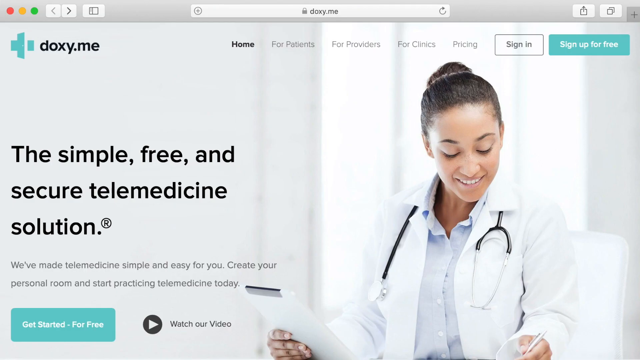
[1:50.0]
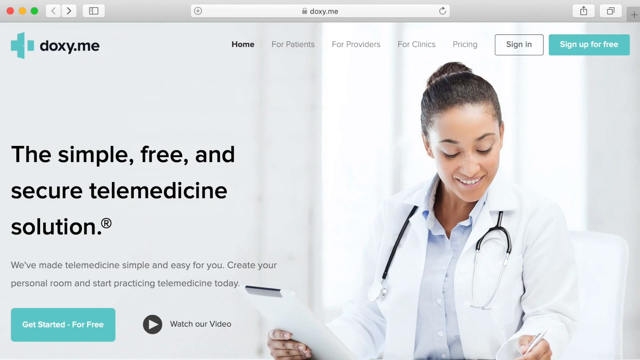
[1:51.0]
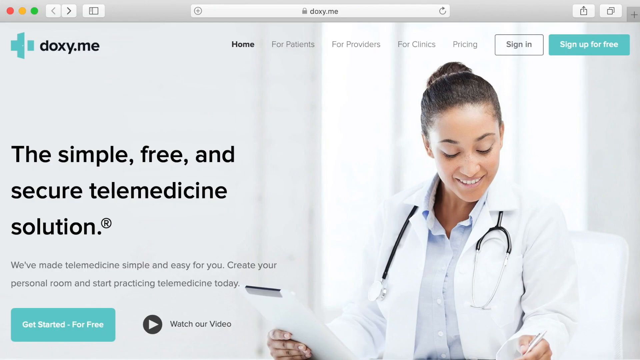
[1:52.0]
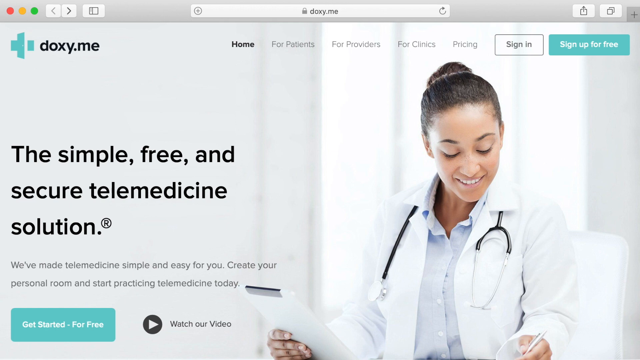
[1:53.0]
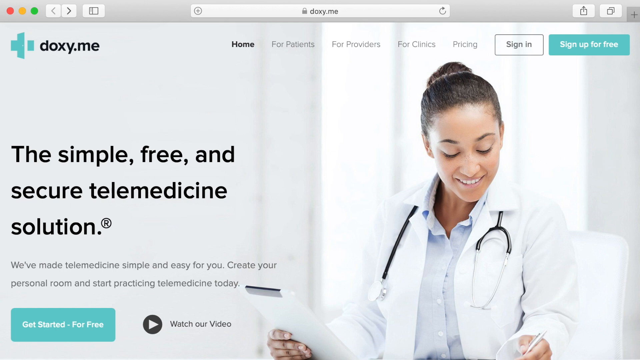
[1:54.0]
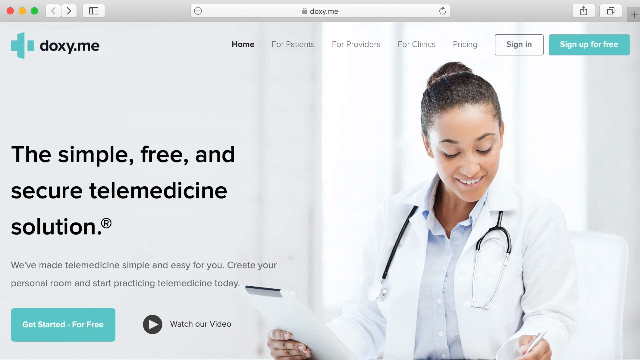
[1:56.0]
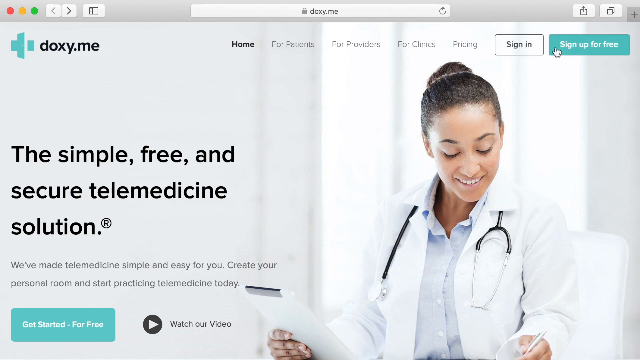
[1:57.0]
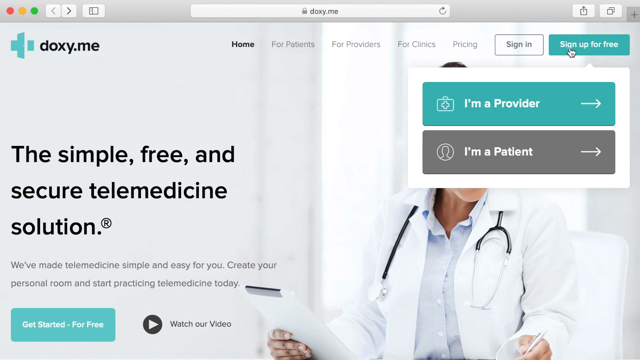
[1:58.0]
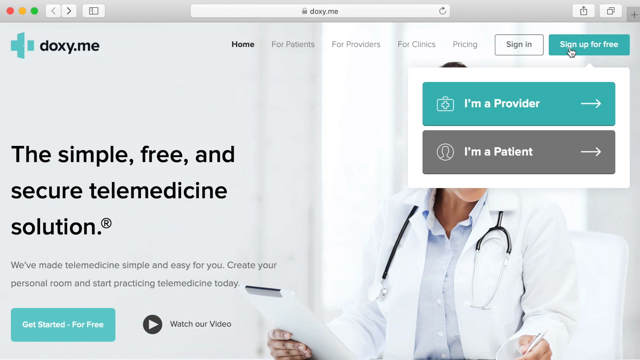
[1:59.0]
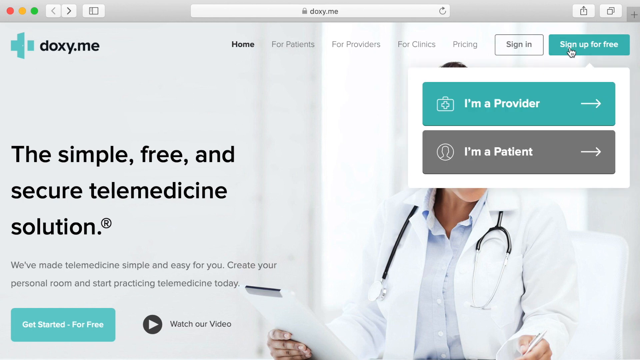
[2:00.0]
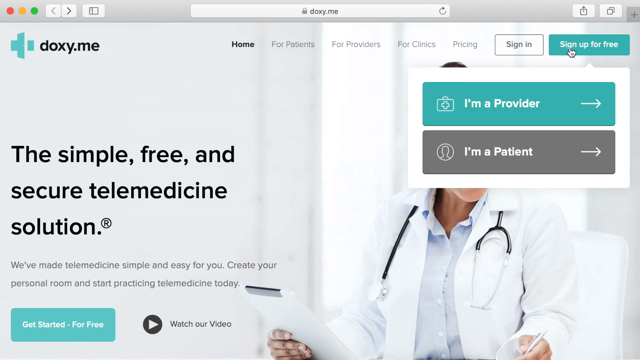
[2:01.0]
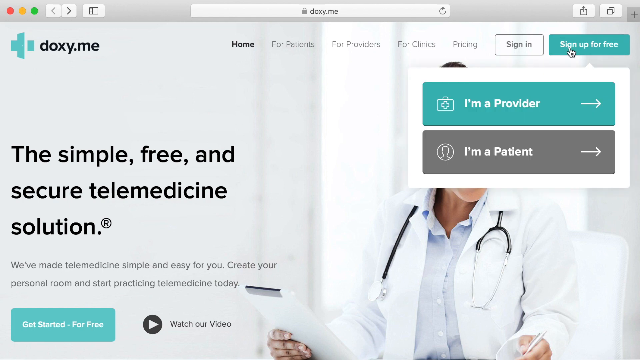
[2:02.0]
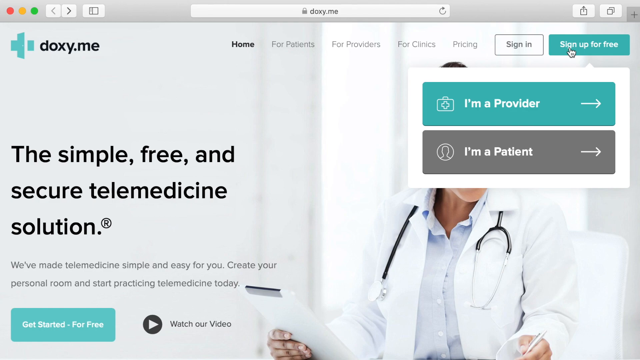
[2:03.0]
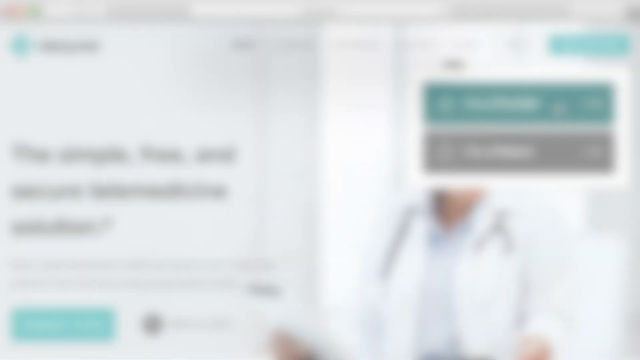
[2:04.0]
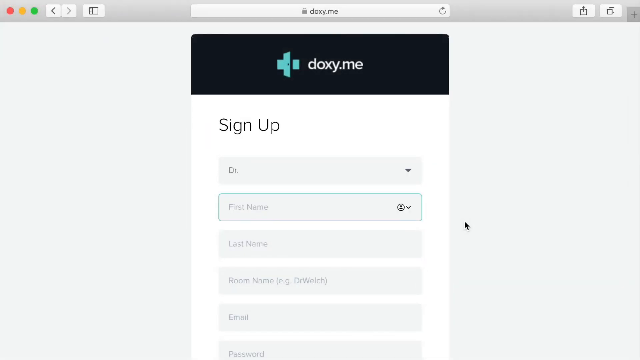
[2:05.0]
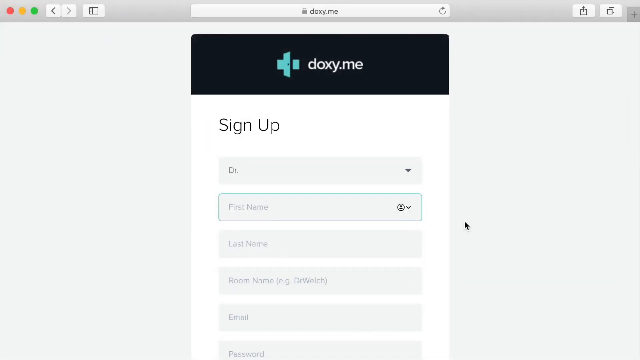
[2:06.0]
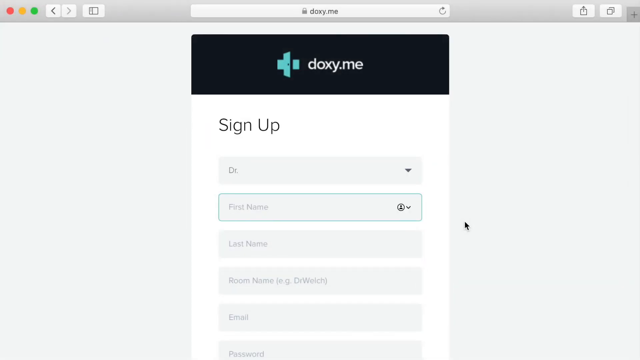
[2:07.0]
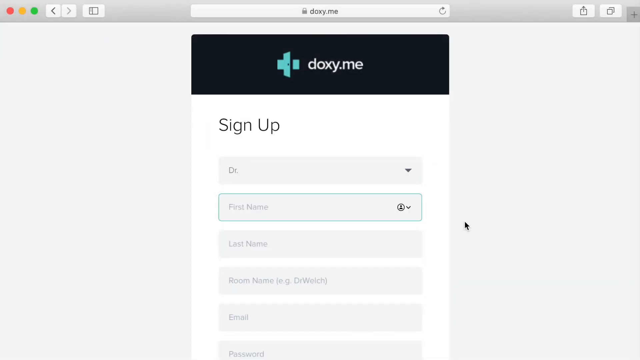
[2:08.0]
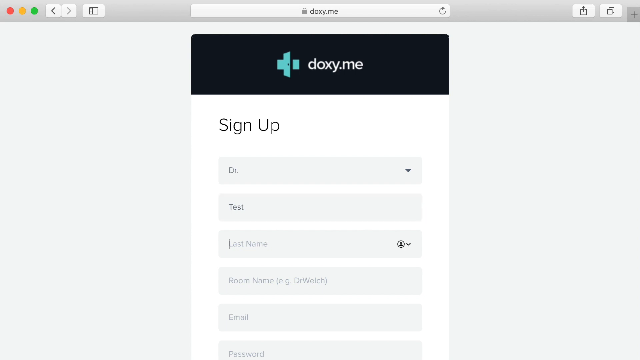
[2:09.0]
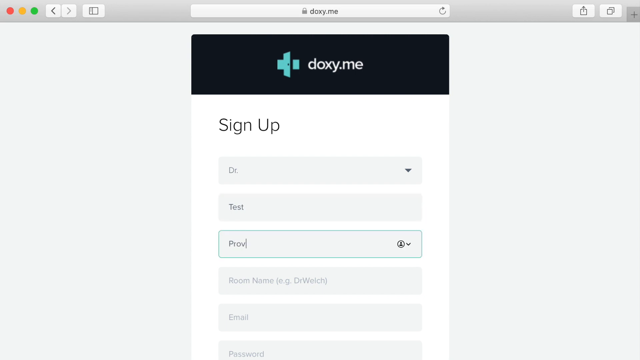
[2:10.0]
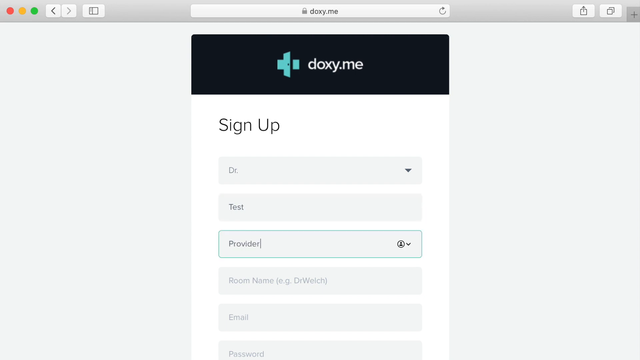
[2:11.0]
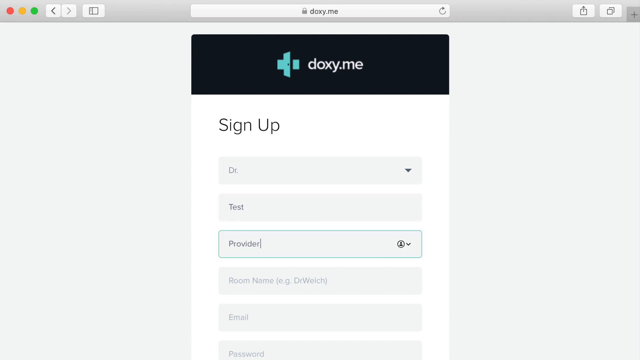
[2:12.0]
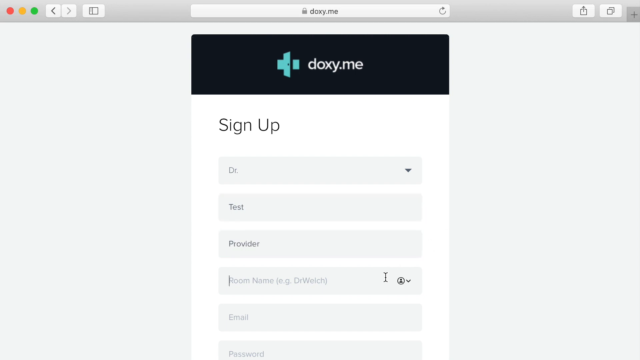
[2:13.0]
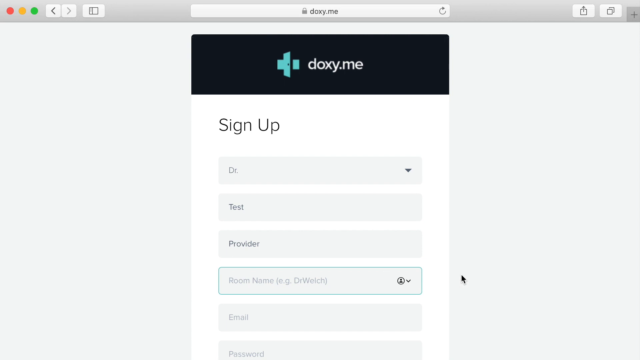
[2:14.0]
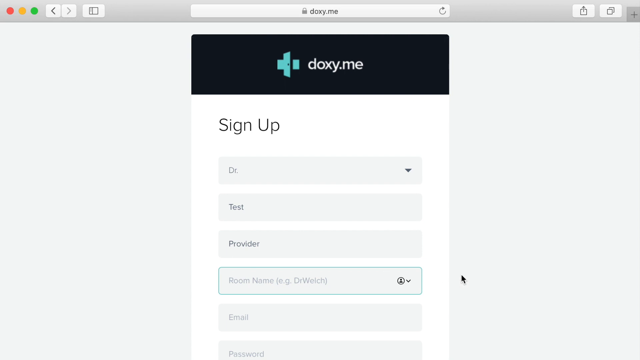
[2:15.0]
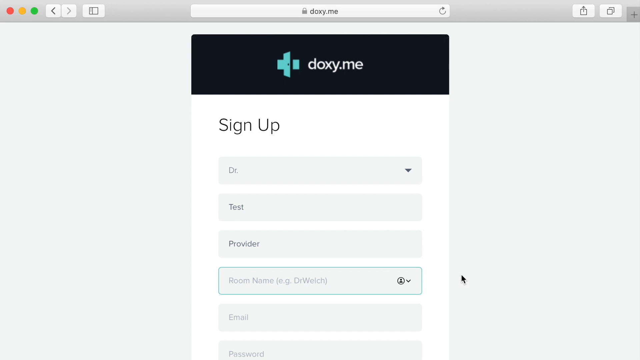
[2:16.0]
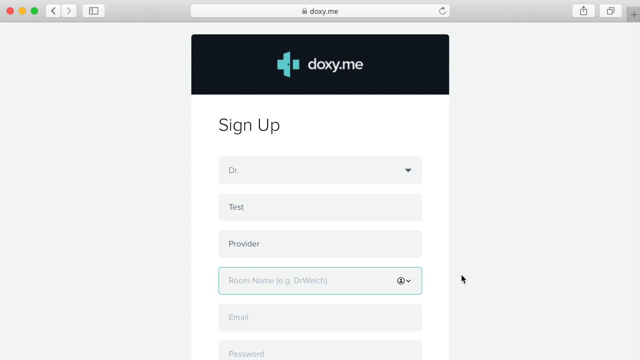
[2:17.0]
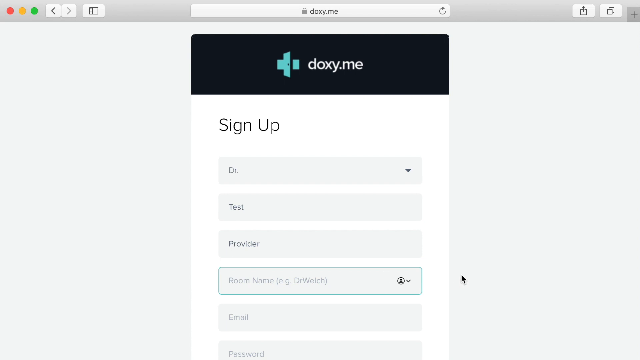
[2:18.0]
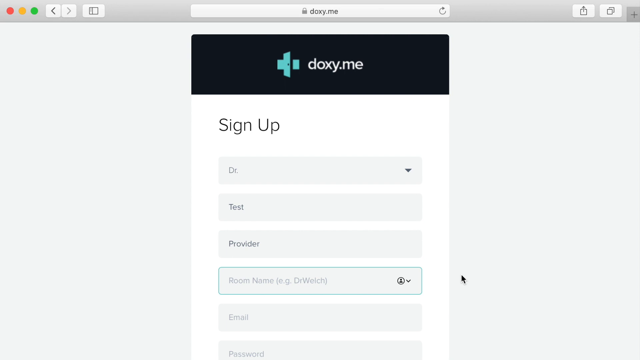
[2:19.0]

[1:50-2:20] A page of the doxy.me website has tabs in the top right corner for navigation. On the left it says "a simple, free, and secure telemedicine solution," and there is a female physician in a white coat with a stethoscope around her neck. Tabs then appear reading "I'm a provider" and "I'm a patient." The next page of the doxy.me website says "sign up" and has several spaces to fill out, such as email address, address, and phone number, and it shows how to click on the areas.